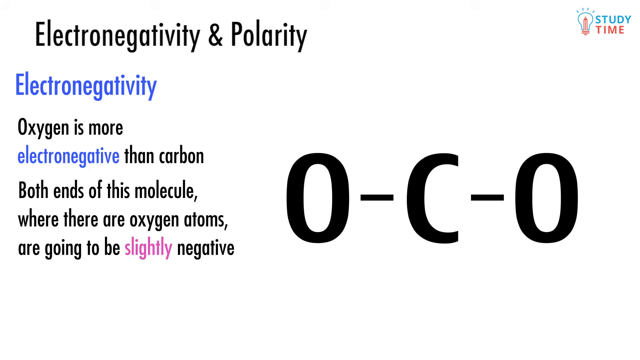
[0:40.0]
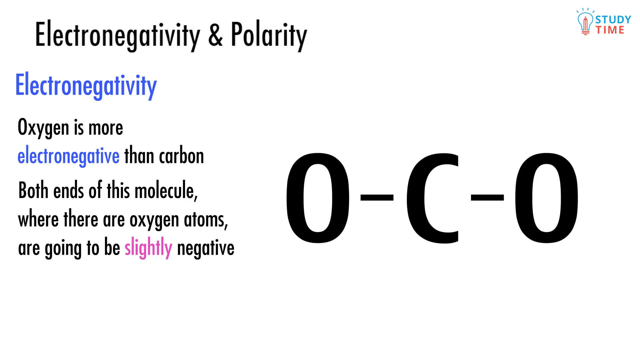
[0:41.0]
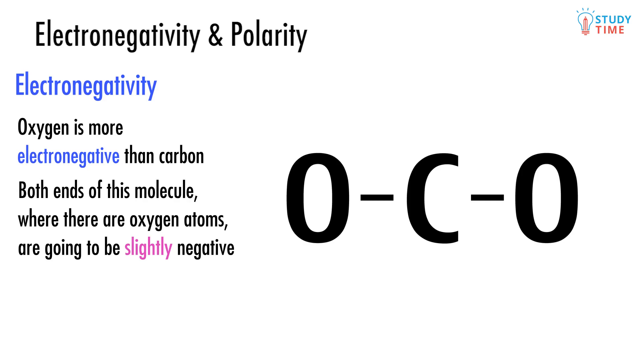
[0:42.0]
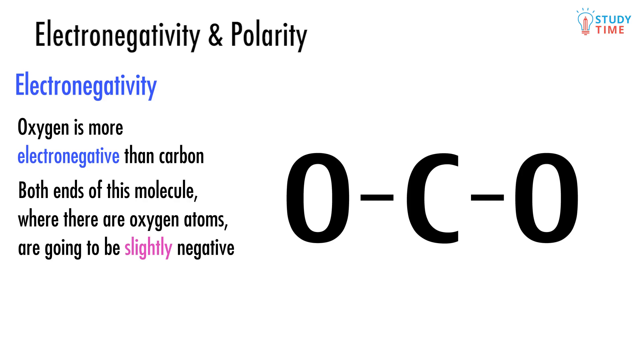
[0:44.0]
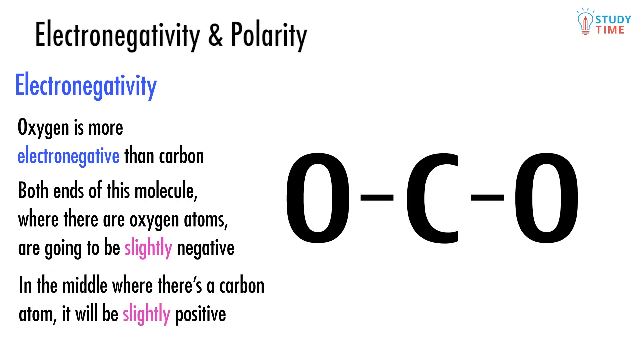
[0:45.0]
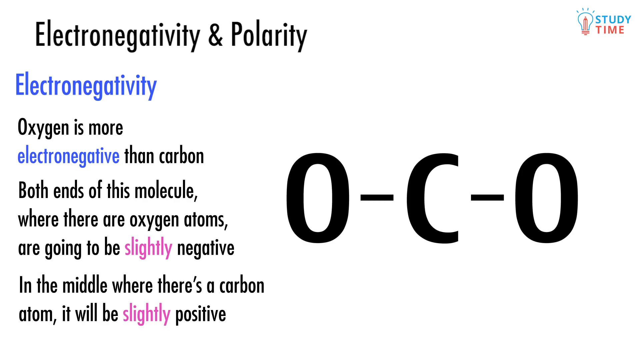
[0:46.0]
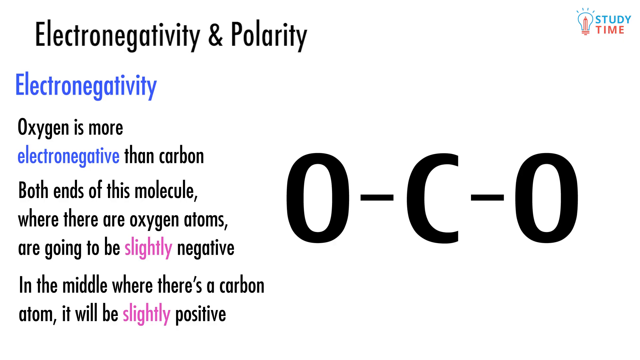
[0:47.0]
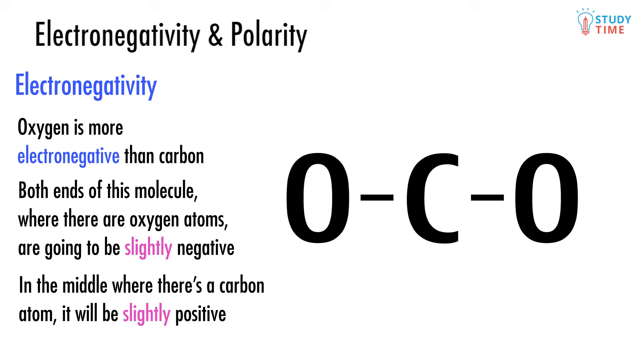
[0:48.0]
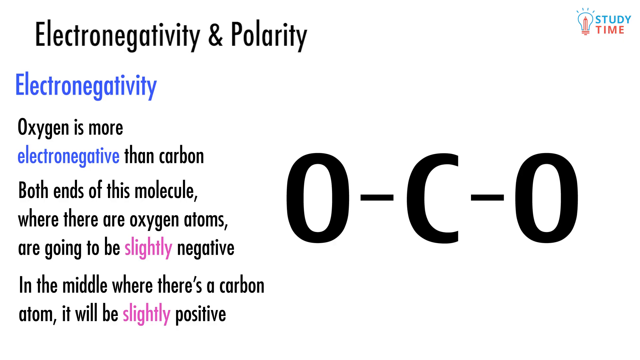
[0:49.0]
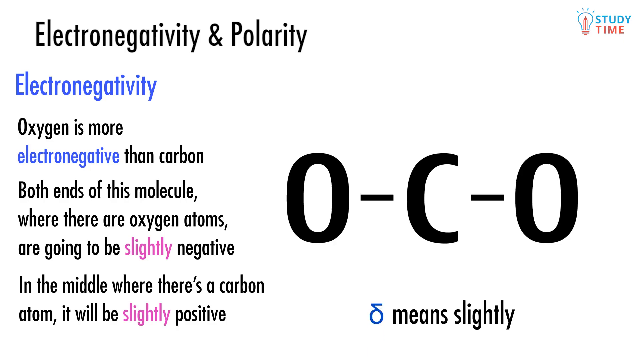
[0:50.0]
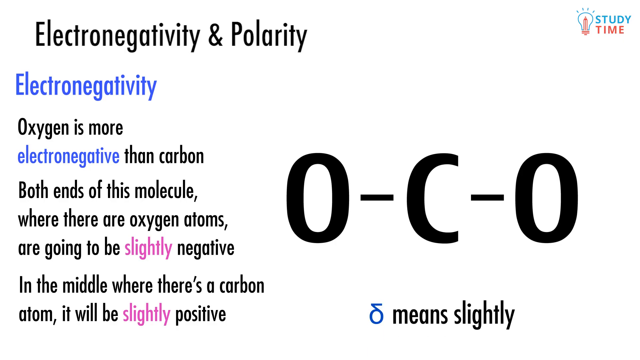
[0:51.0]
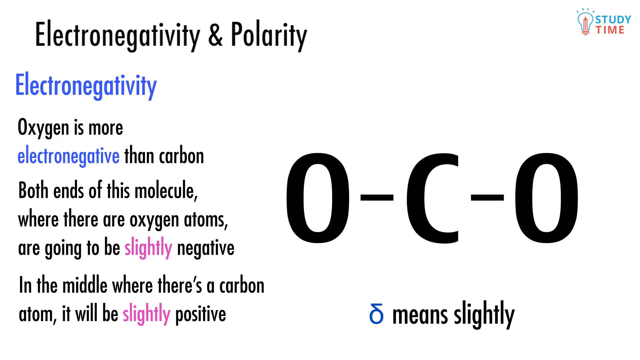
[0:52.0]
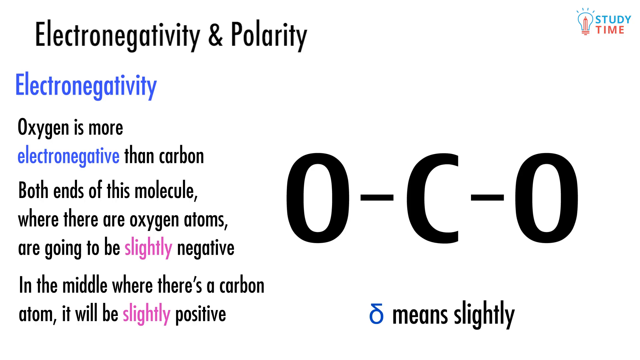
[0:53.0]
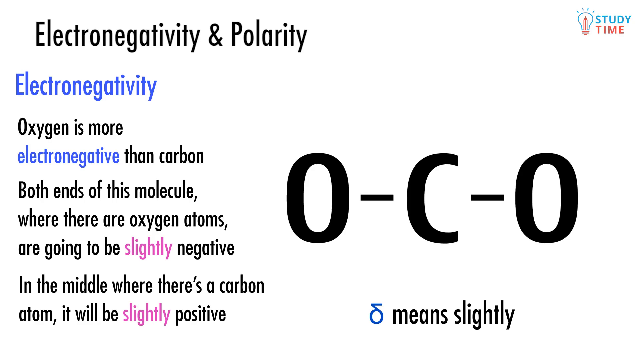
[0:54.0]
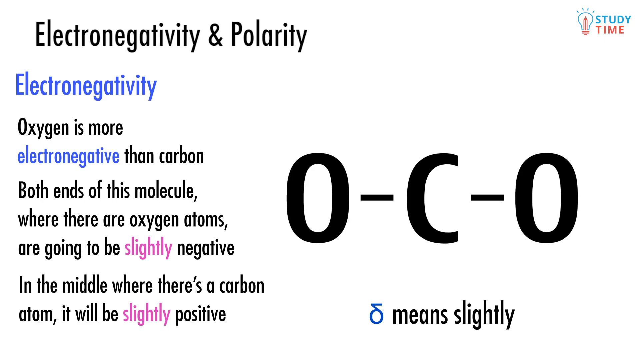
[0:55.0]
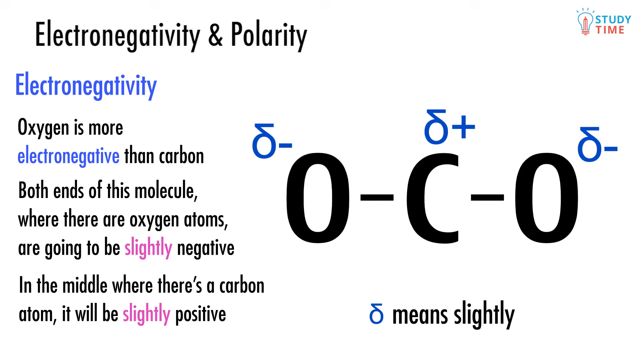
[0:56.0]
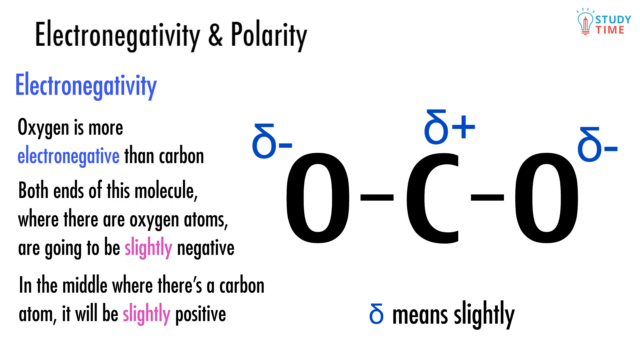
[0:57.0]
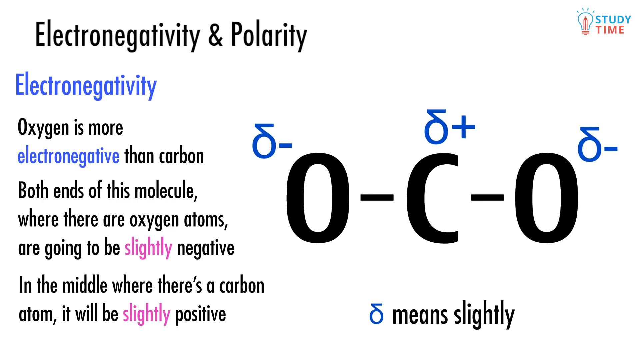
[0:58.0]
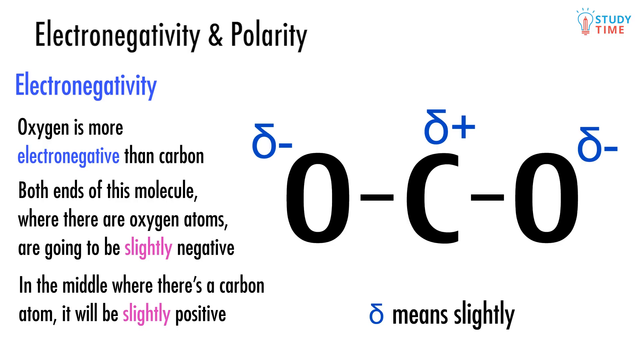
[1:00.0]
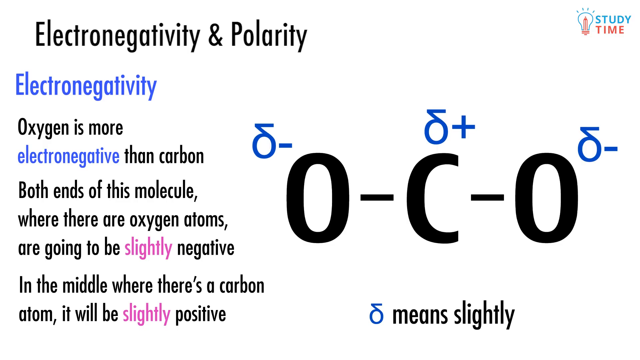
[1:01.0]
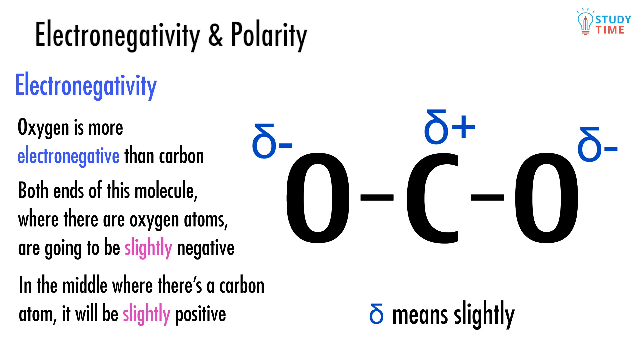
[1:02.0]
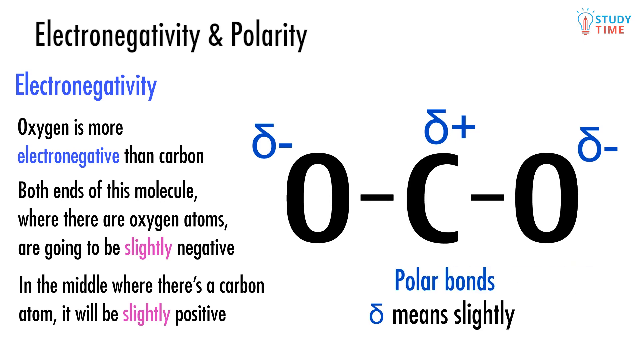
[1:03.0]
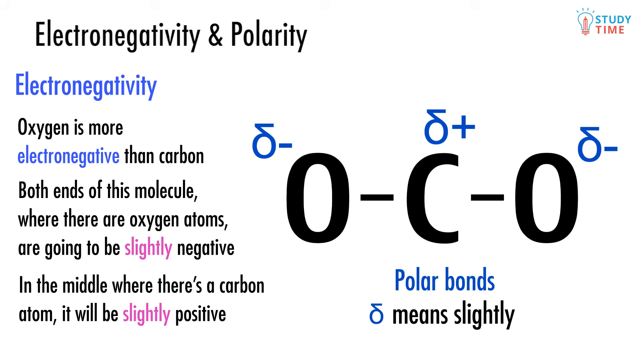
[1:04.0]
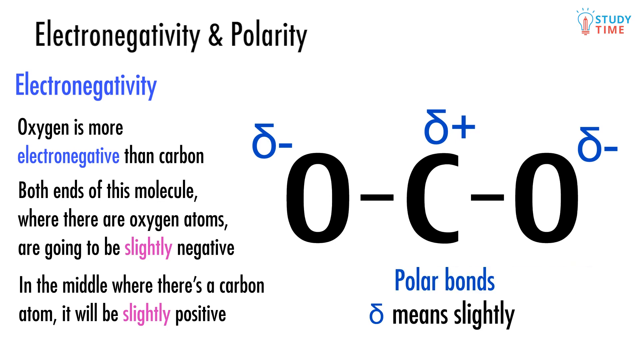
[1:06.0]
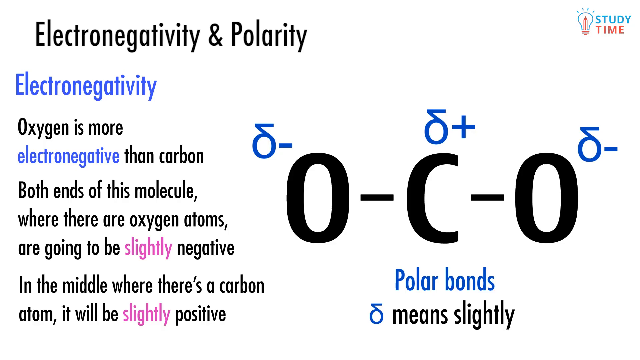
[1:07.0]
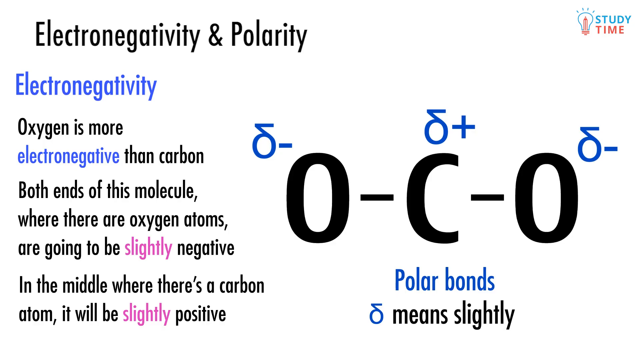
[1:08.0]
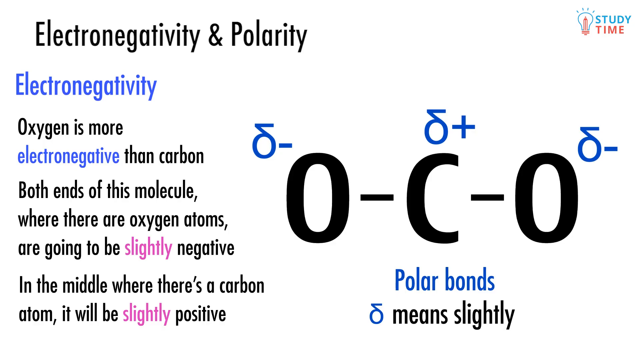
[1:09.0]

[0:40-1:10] The screen stays the same, with the text "oxygen is more electronegative" and "both ends of this molecule where there are oxygen atoms are going to be slightly negative". Then text appears at the bottom left reading "in the middle where there's a carbon atom, it will be slightly positive". Below the combined elements is a defined symbol that is kind of like a circle; it almost looks like a type of Roman numeral or a wedding ring, but with more of an angle, a triangle sticking out. According to the definition at the bottom of the page, this symbol means "slightly". The symbol is placed on each element of the molecule along with a negative or positive sign, showing the O as slightly negative, the C as slightly positive, and the other O as slightly negative. Below that, "polar bonds" is highlighted in blue text.